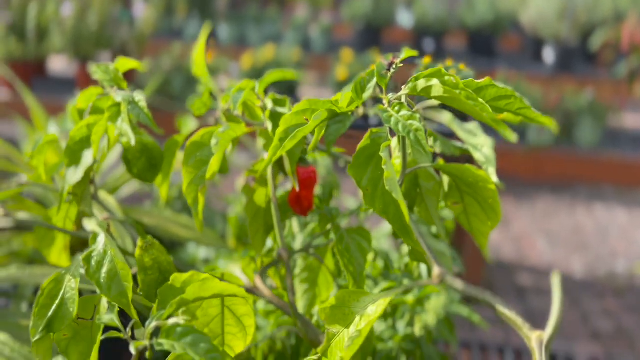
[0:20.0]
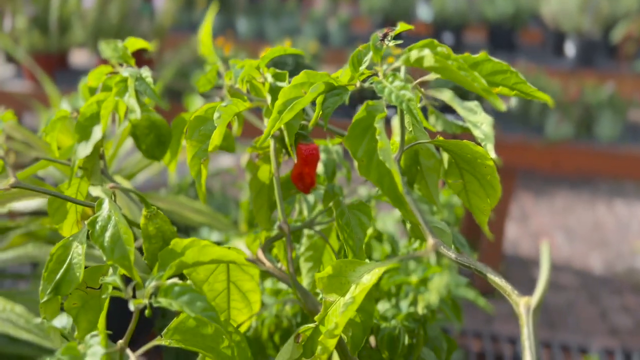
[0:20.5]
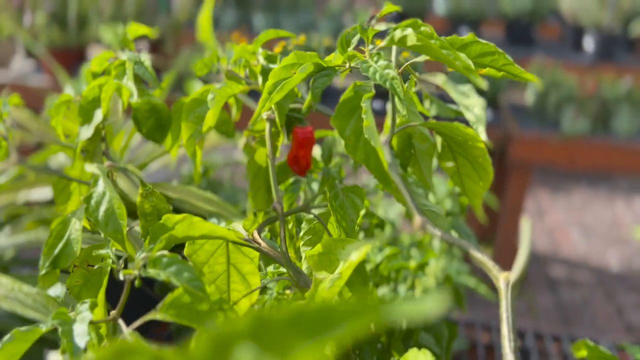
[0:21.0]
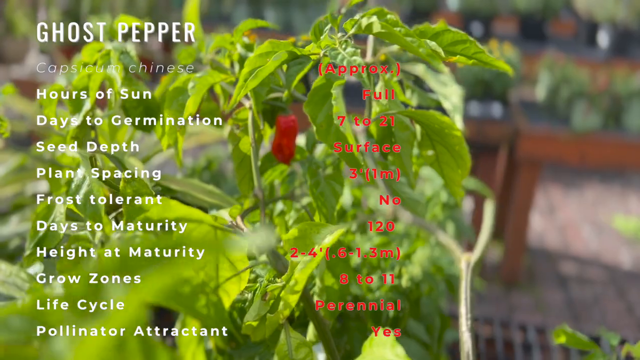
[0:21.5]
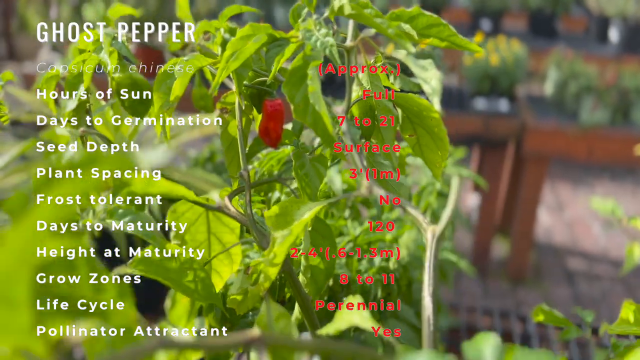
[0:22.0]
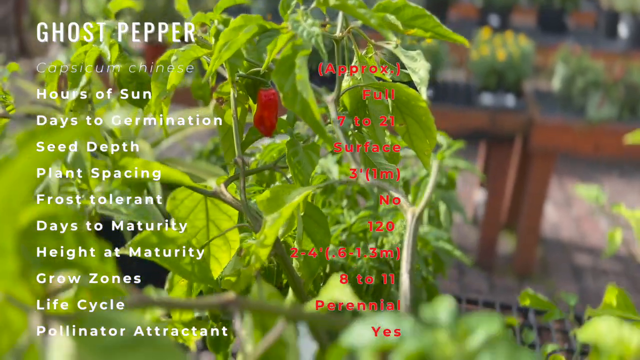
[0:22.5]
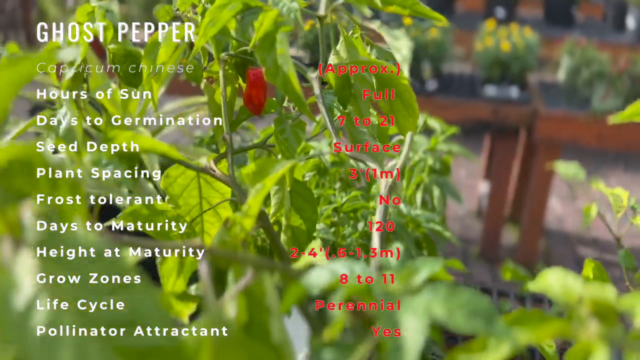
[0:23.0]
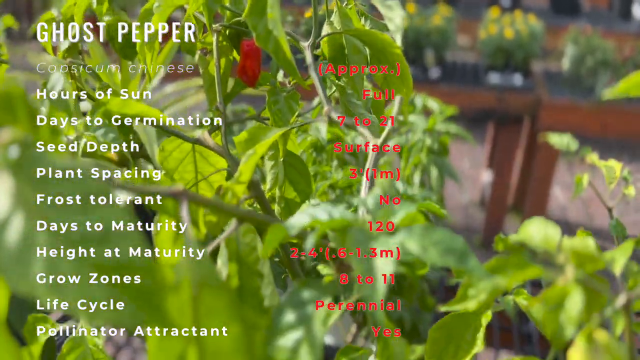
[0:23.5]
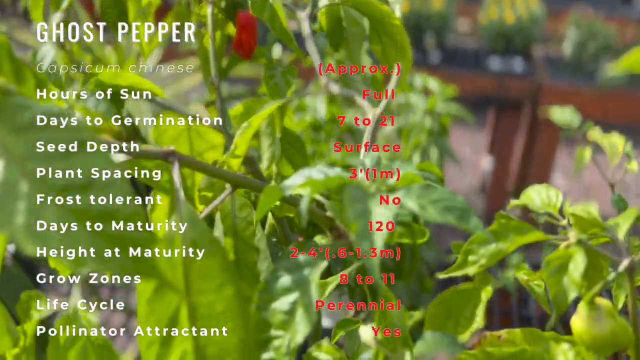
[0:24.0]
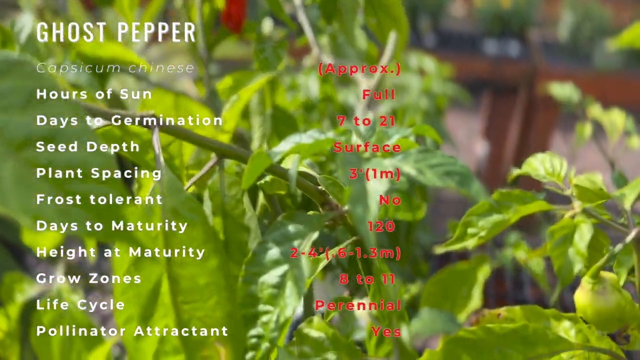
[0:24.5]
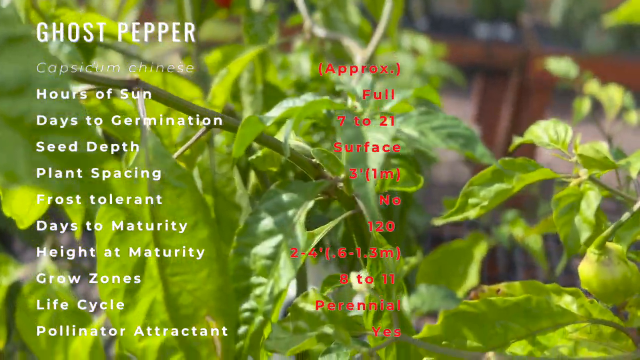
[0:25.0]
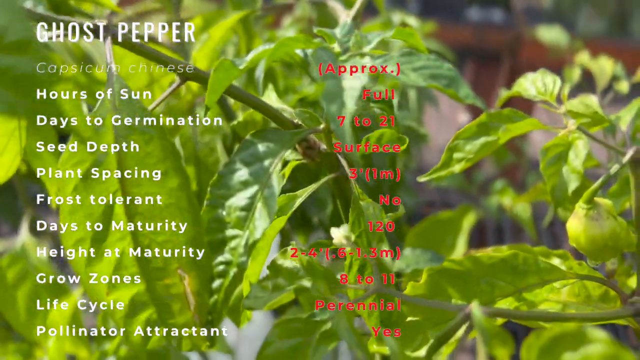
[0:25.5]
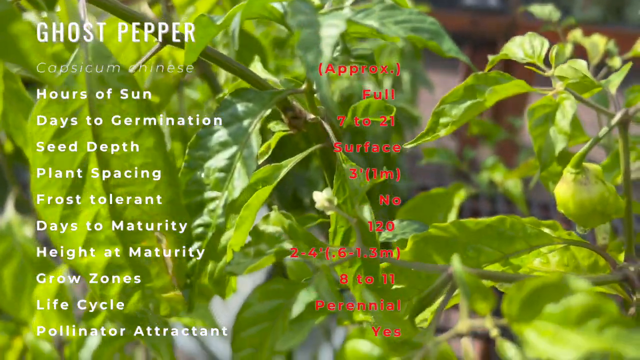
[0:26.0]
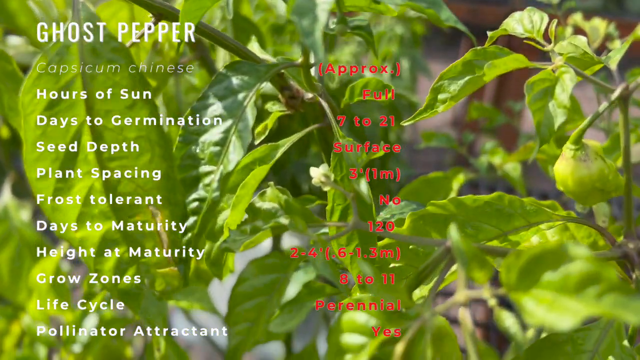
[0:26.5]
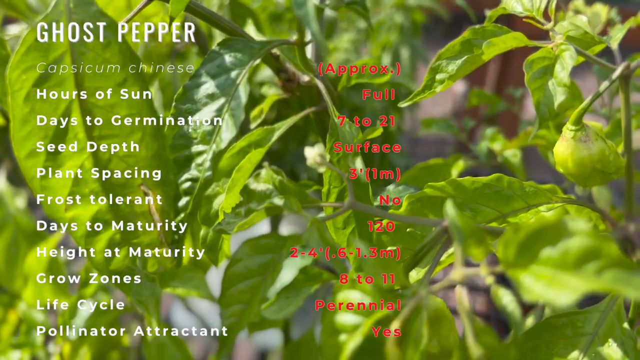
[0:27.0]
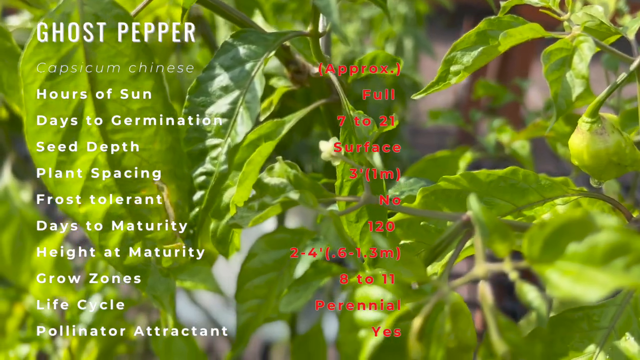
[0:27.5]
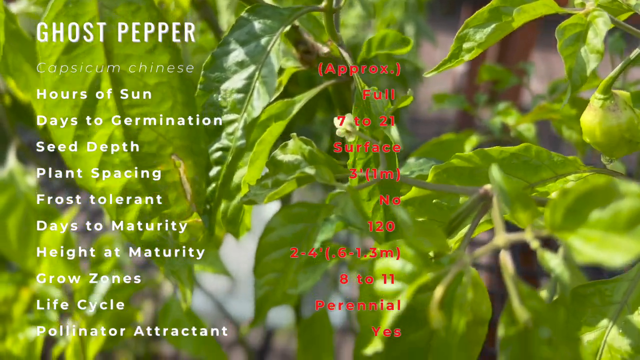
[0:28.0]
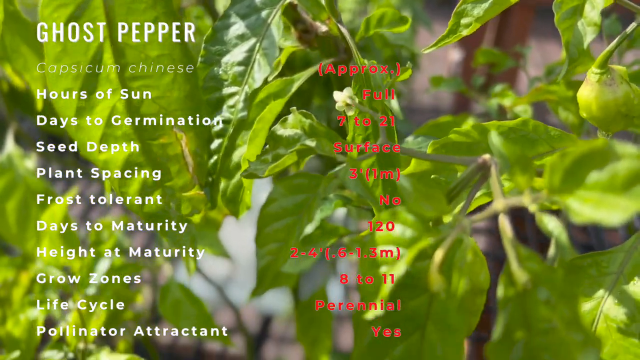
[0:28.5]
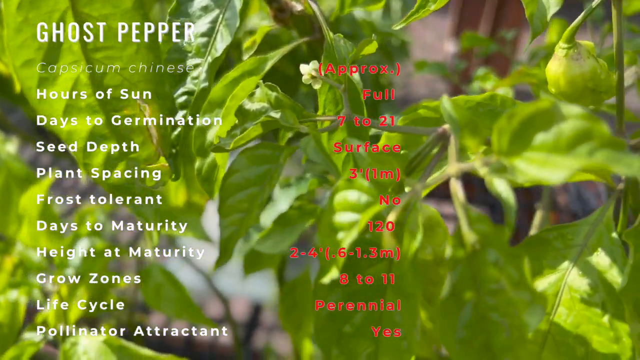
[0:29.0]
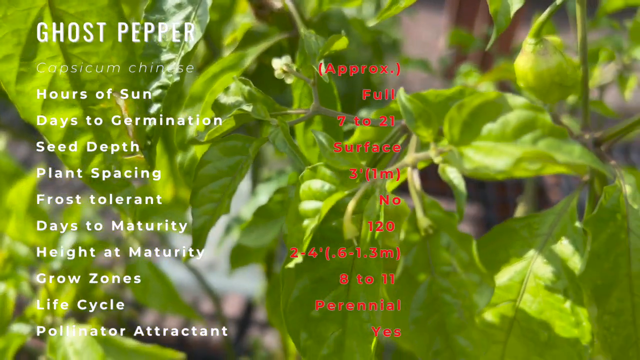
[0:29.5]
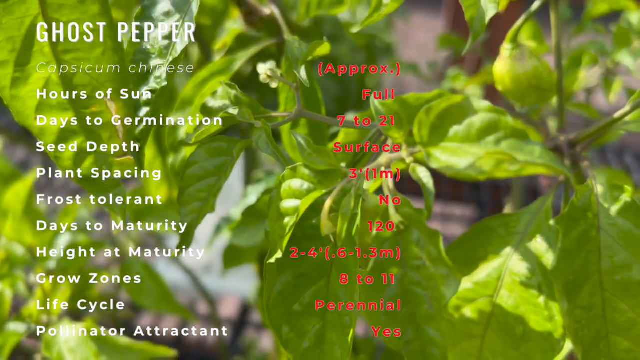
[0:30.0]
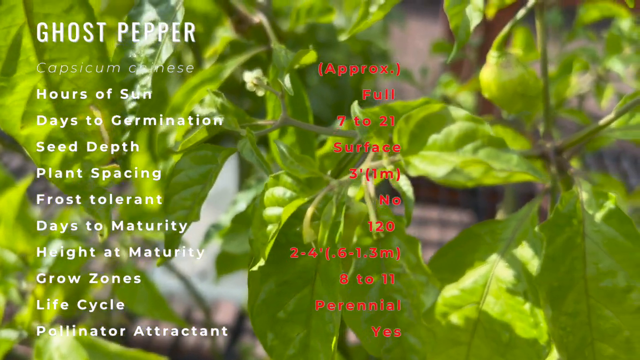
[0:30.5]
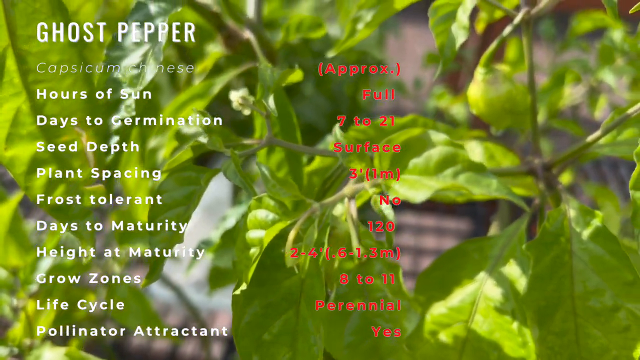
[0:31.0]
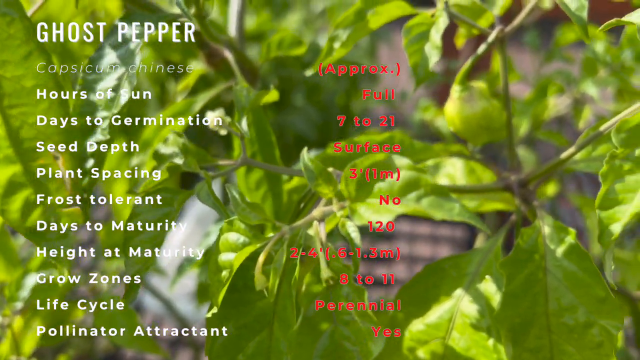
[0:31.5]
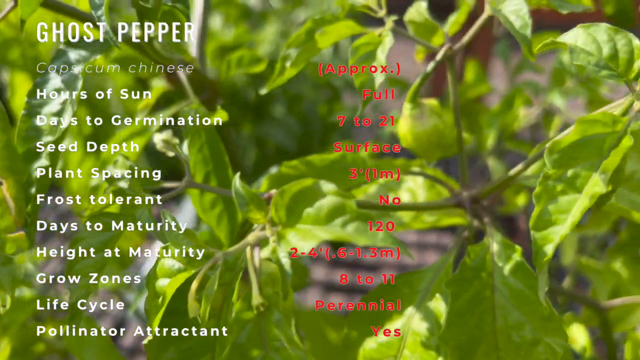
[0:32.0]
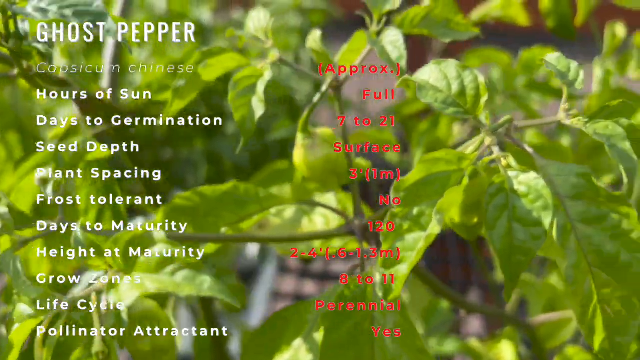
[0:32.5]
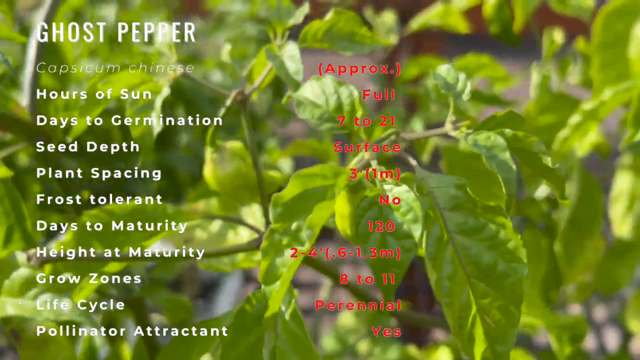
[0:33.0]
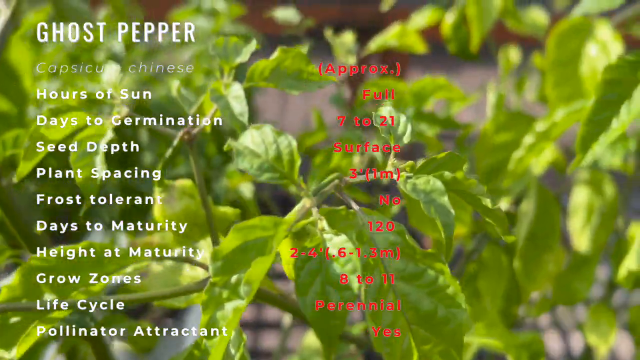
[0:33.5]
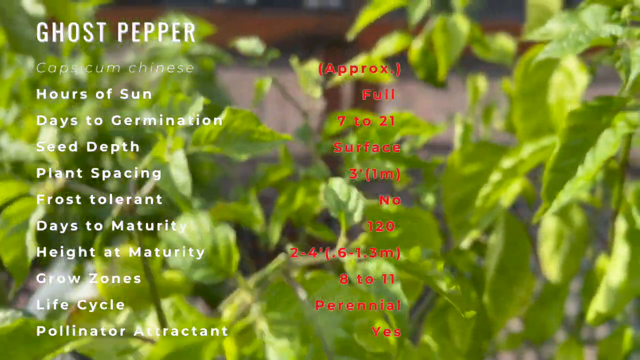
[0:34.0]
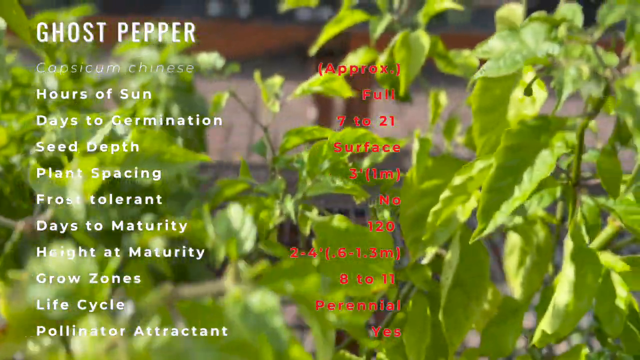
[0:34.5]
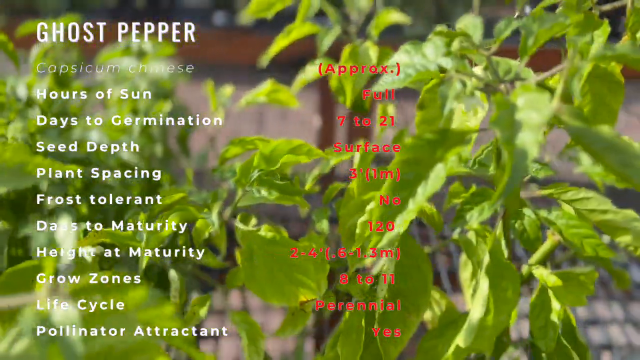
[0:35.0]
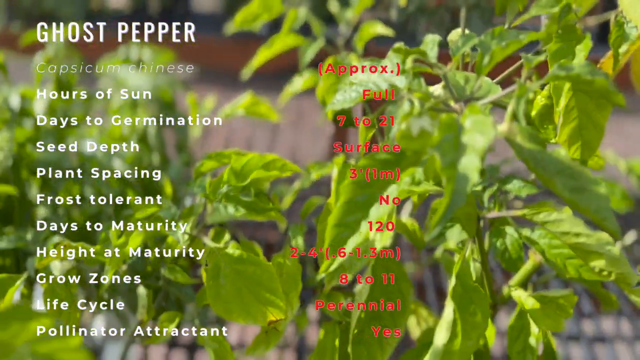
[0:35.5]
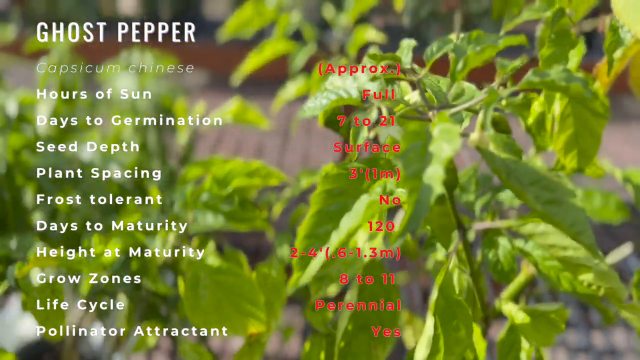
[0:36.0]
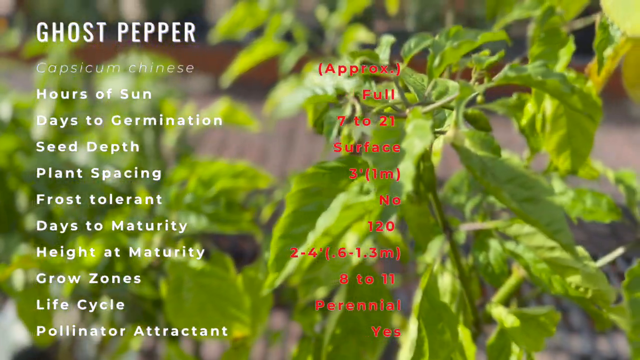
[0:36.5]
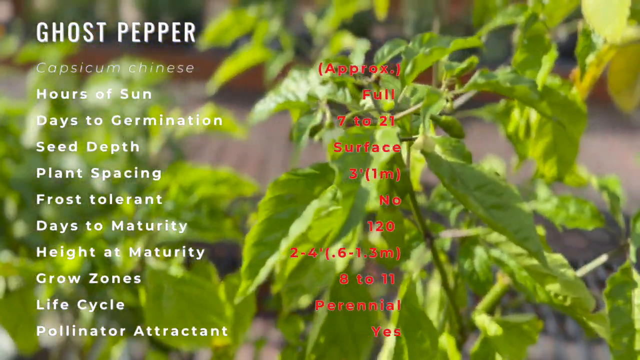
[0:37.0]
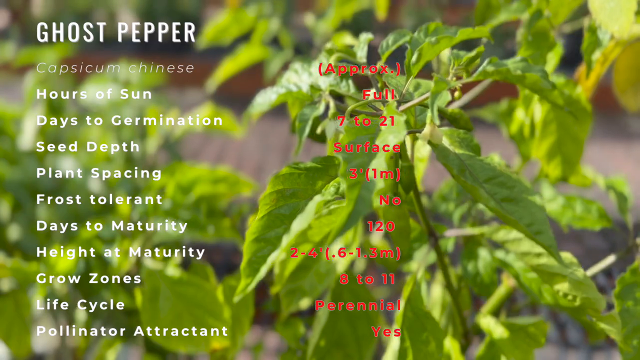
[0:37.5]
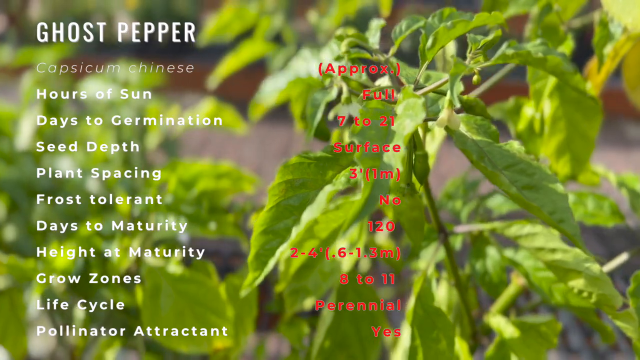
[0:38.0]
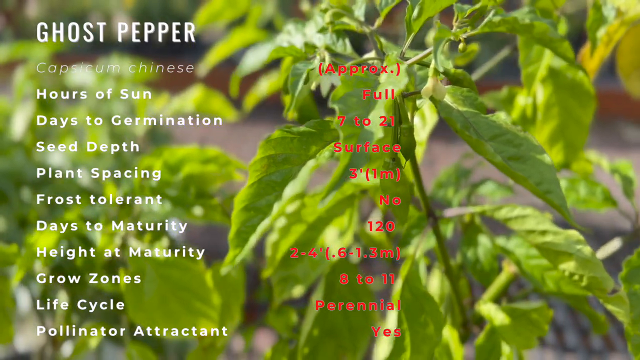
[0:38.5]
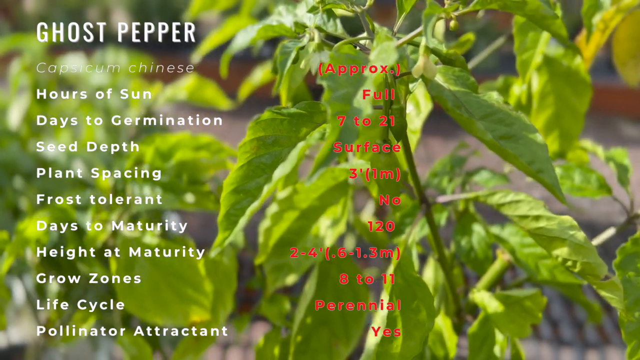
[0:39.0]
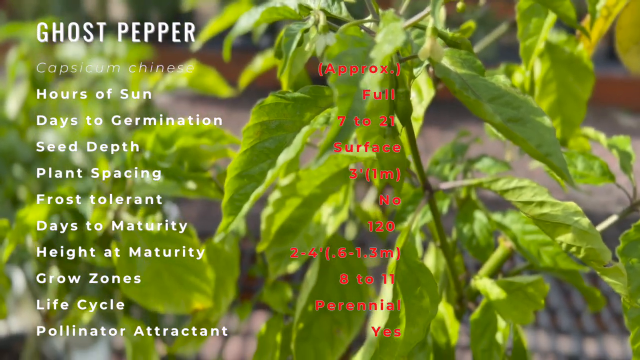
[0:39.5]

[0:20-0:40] A plant is shown with writing on the screen. On the left-hand side, "ghost pepper" appears in white font, along with other words listing 10 categories of information about the pepper plant. On the right-hand side is writing in red font with the same number of rows as the white writing, giving basic information about the plant and its growing conditions, such as how long it takes to germinate and the height at maturity.